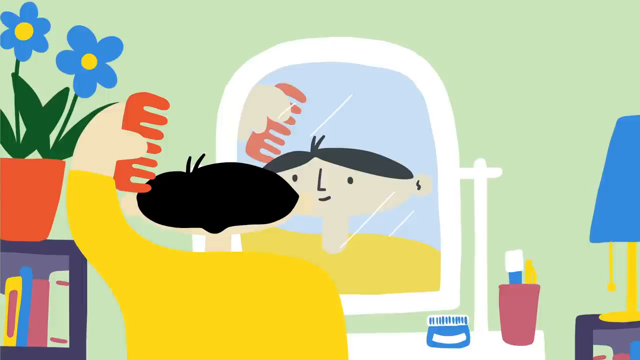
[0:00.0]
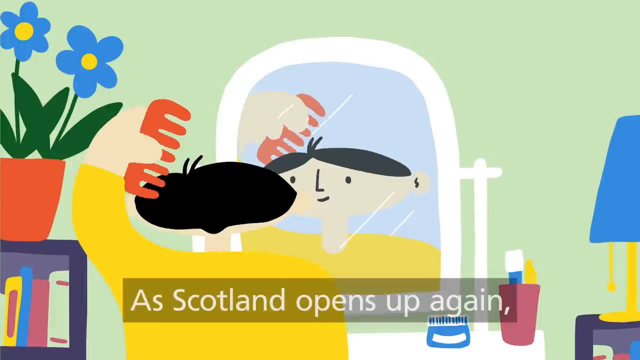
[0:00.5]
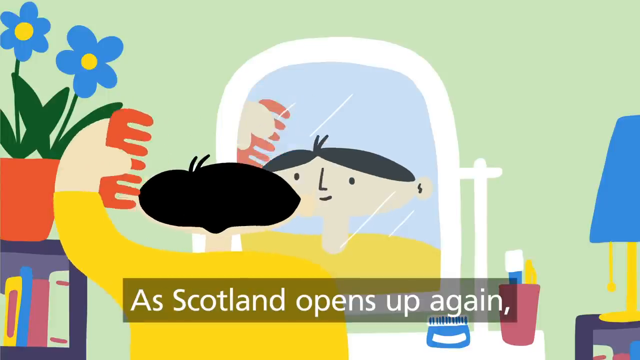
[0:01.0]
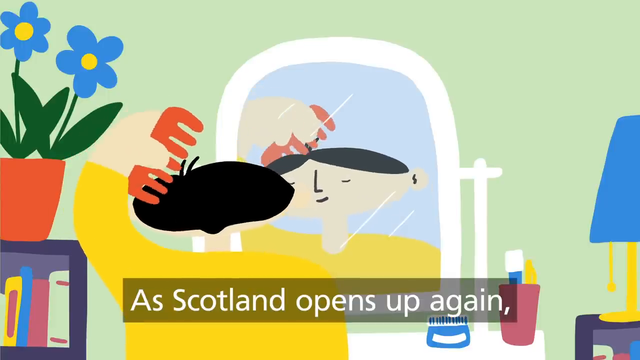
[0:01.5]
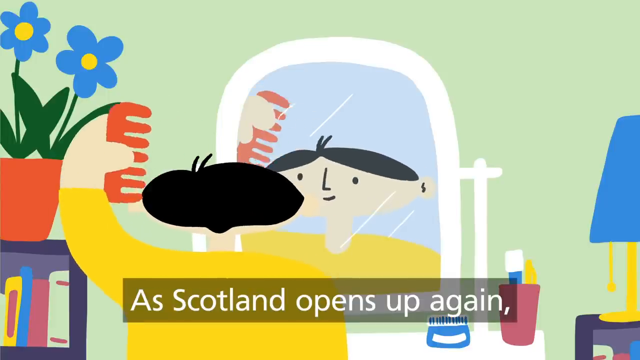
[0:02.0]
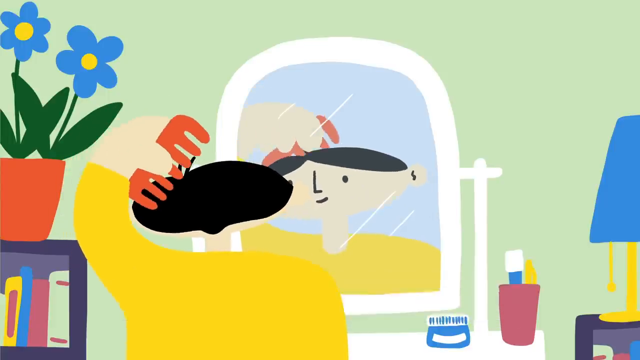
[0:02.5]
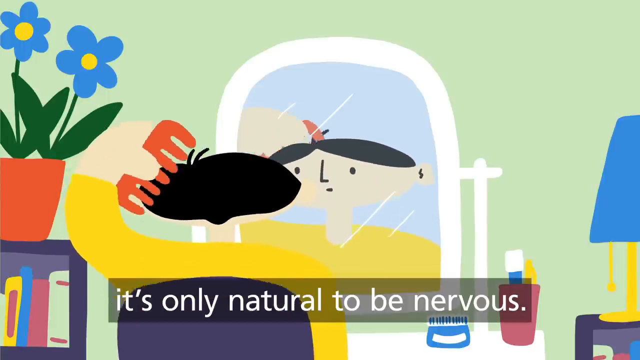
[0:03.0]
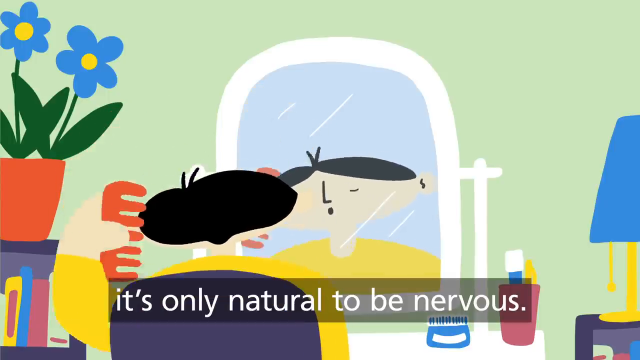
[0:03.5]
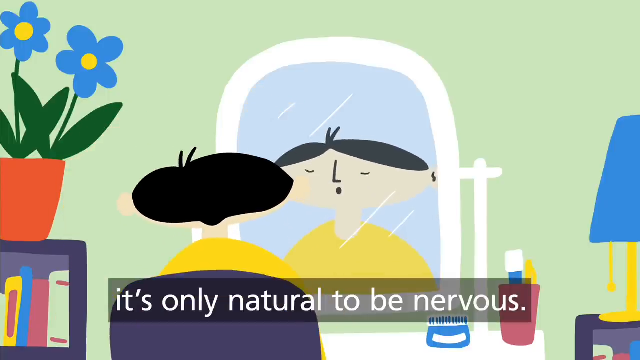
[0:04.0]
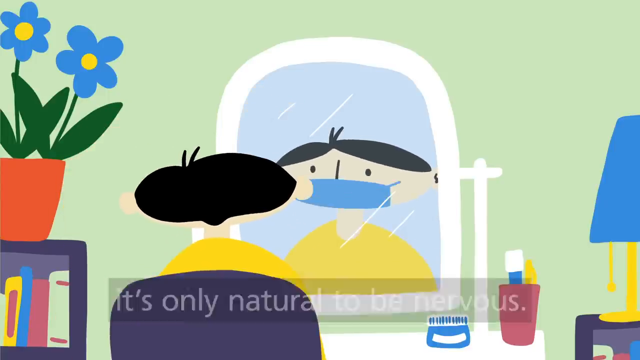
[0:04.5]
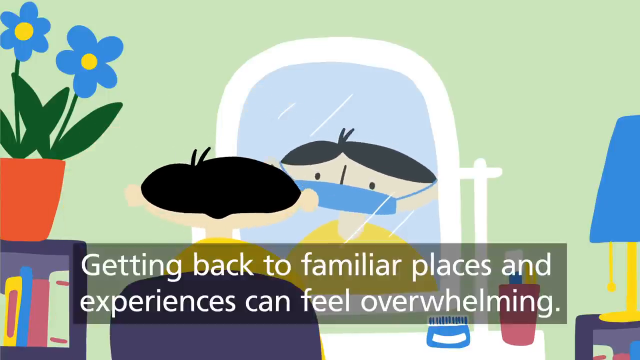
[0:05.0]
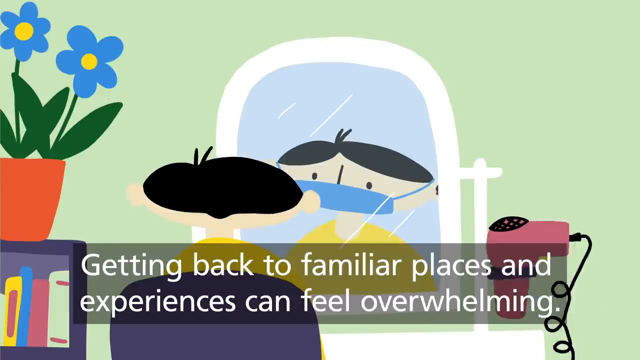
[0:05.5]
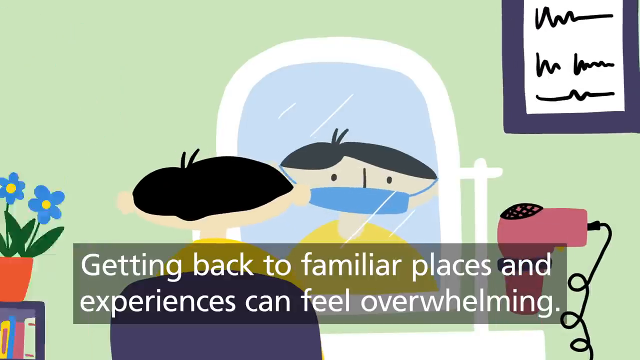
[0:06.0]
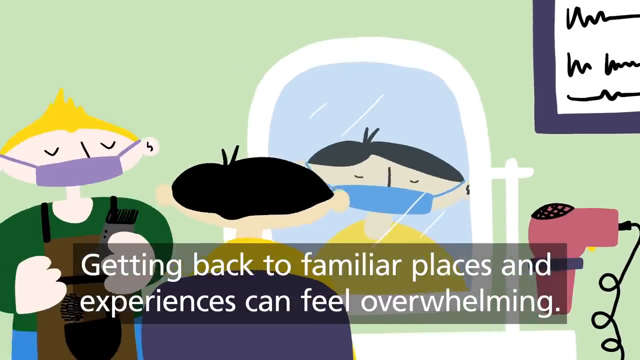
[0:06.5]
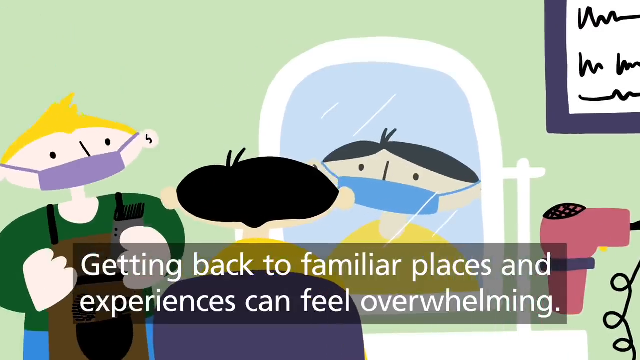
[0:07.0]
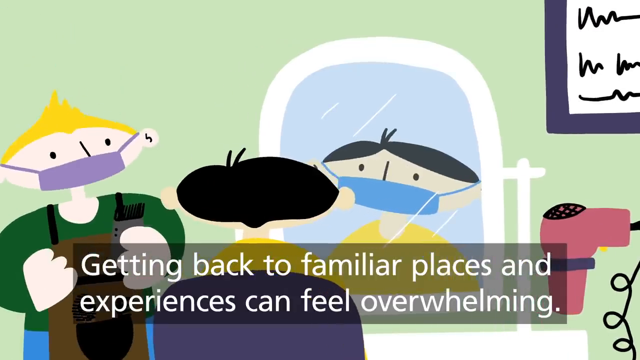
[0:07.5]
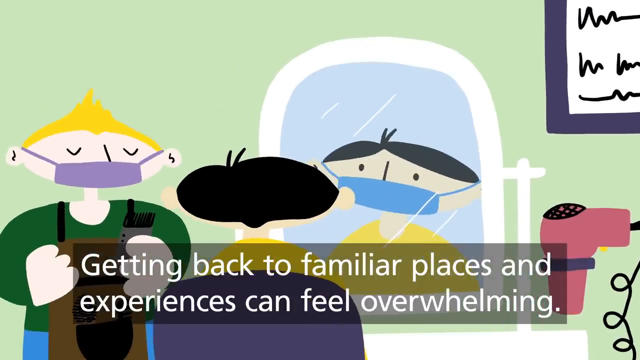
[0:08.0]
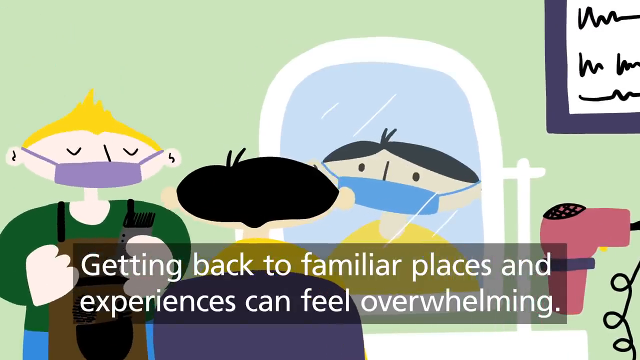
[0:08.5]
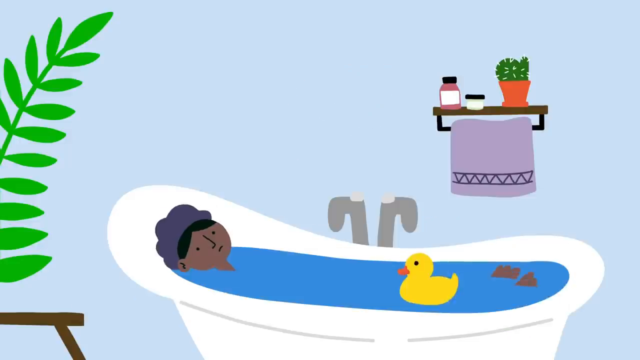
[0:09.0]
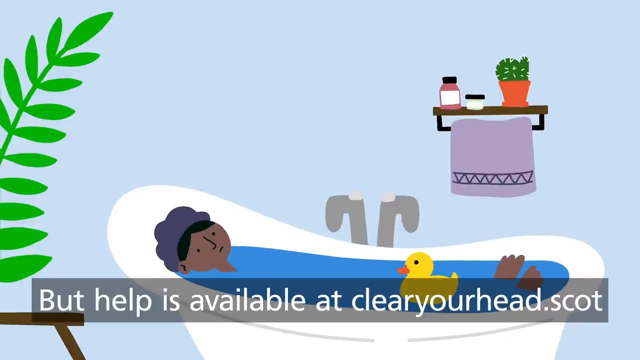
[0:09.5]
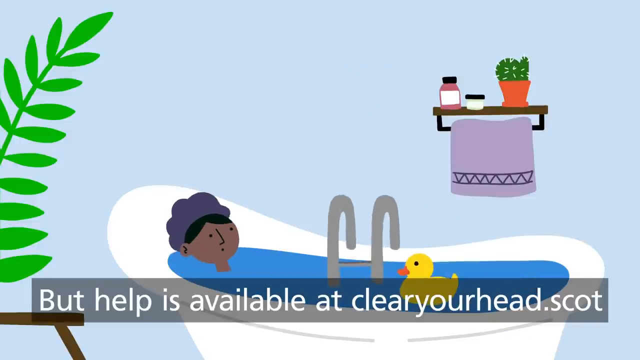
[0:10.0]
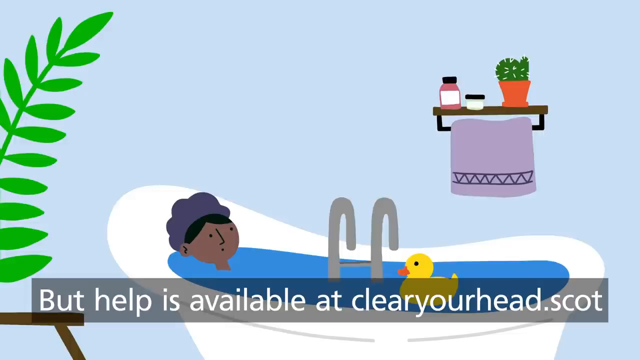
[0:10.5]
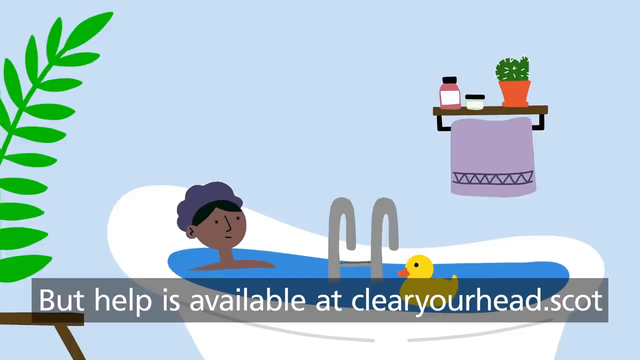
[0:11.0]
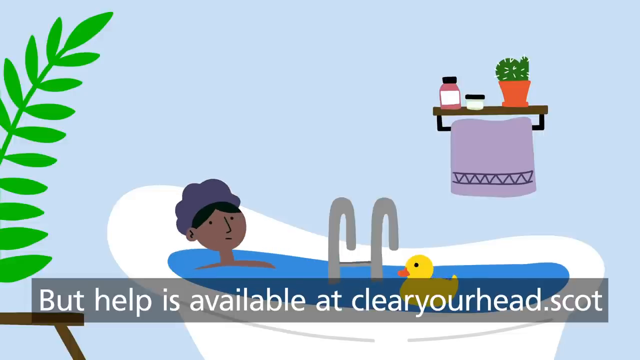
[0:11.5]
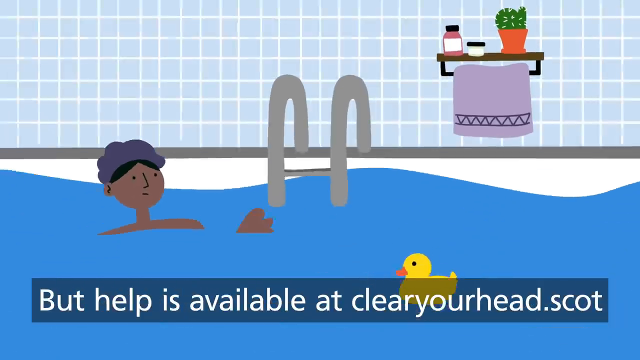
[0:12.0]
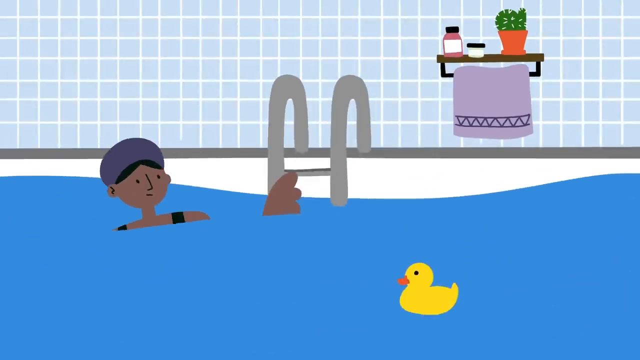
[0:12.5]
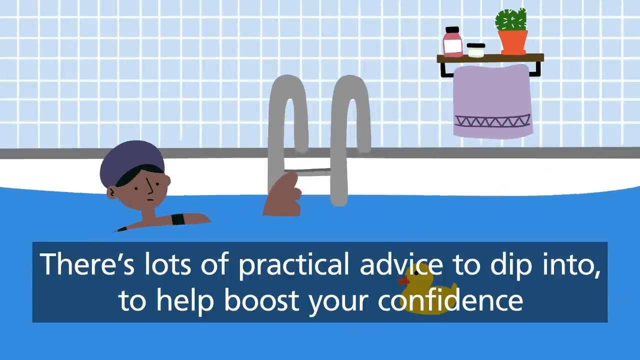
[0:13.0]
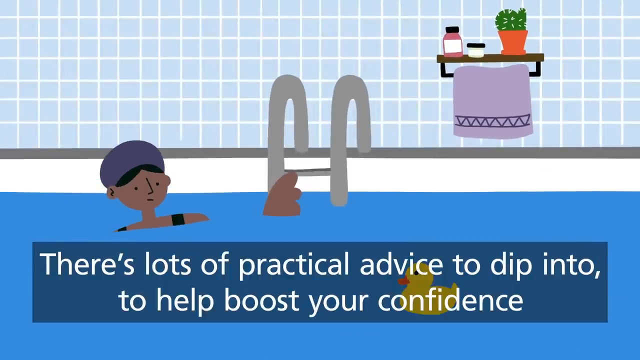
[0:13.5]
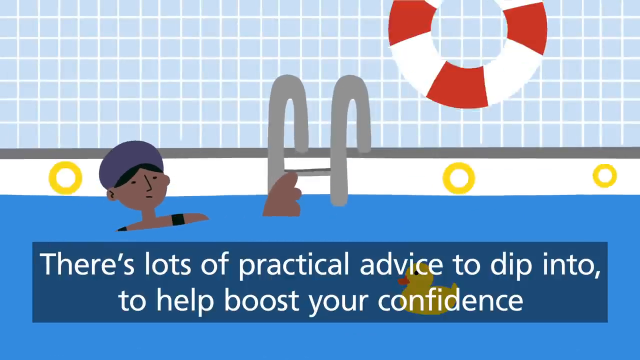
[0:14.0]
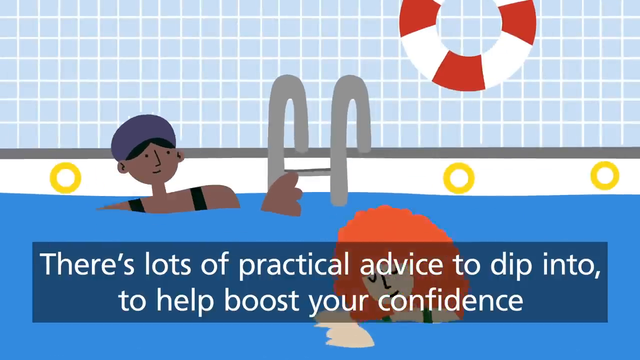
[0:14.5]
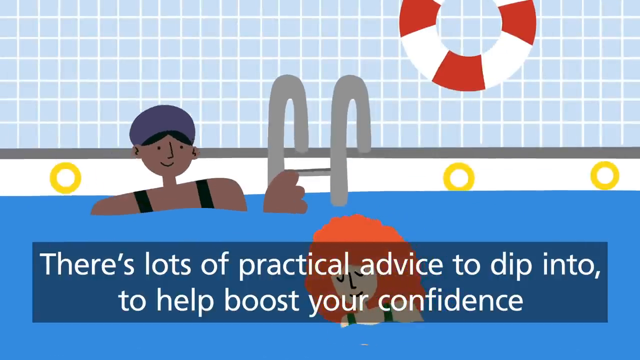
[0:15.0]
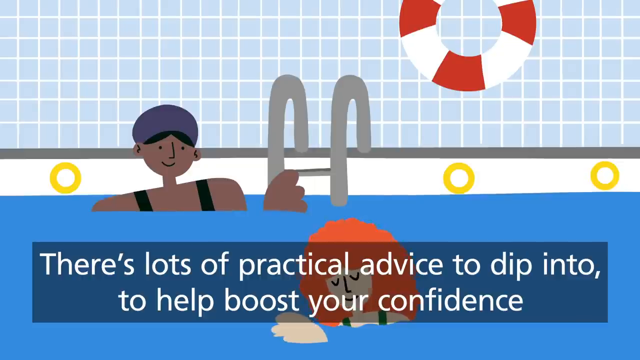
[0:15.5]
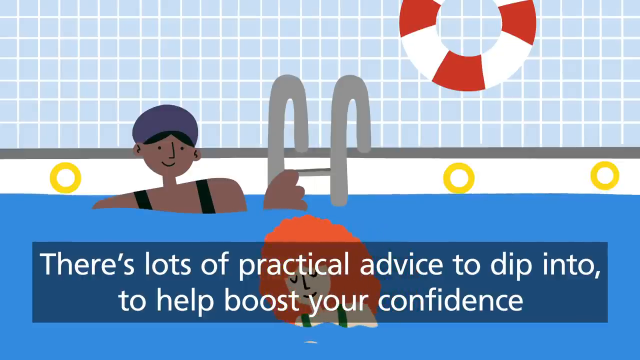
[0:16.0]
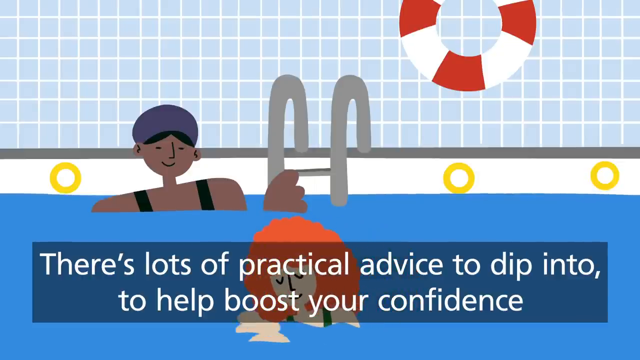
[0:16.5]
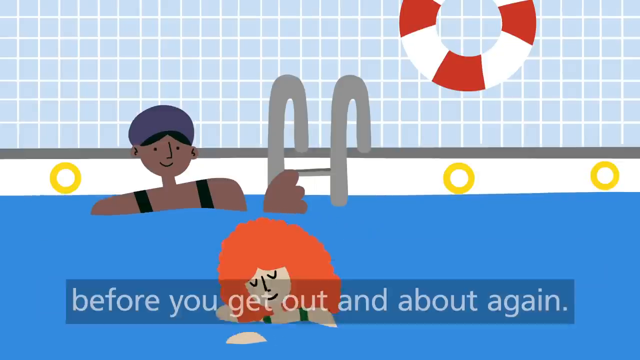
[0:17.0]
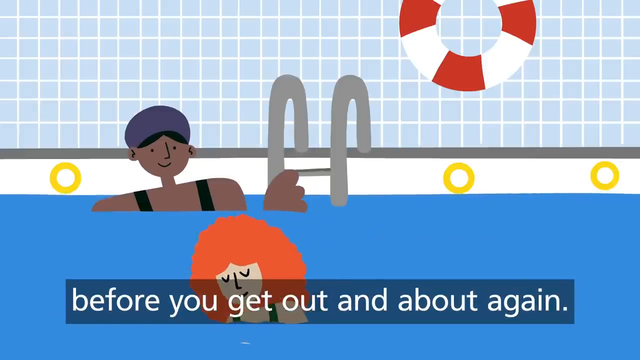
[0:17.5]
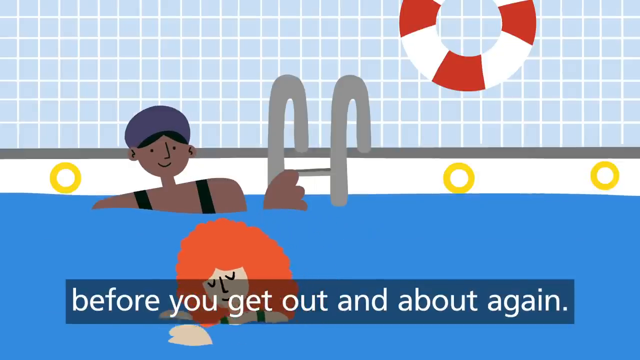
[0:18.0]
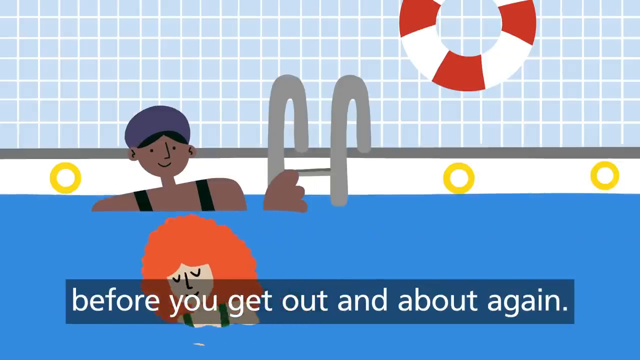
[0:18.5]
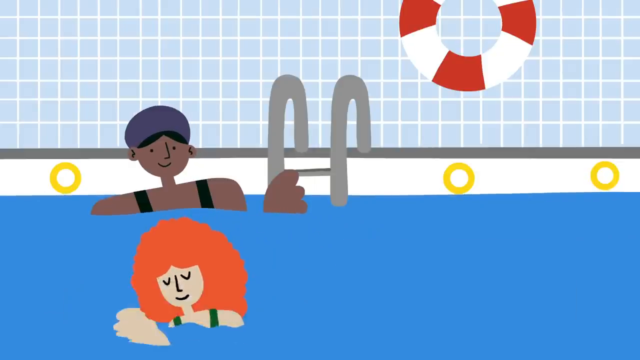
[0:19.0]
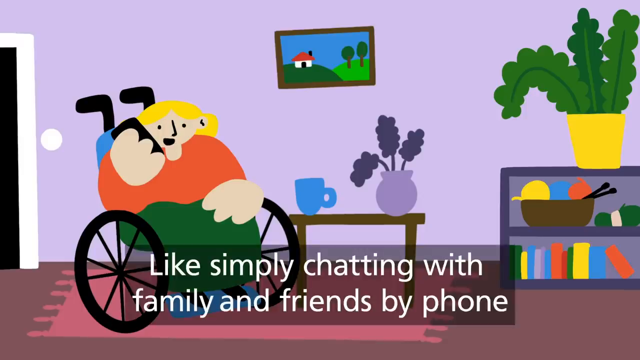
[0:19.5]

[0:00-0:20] A little man with black hair and a yellow shirt combs his hair in front of a mirror. The style is very simplistic and two-dimensional, with no depth whatsoever, so there are no shadows in the clothes, and it is very bright and colorful rather than muted. Text runs along the bottom, like a transcript. The scenery changes very fast: objects are drawn out of the picture and other people or objects are put in without any natural movement. The people in the picture wear face masks. The scene then cuts to a woman sitting in a bathtub. No room is visible around her, just a rack with a towel, which maybe resembles a wall. The bathtub gets bigger and bigger until it looks like a community pool.